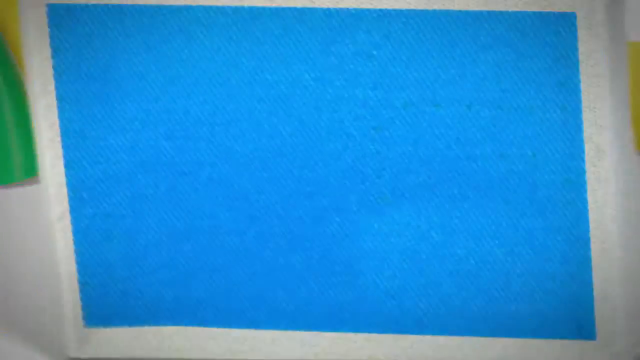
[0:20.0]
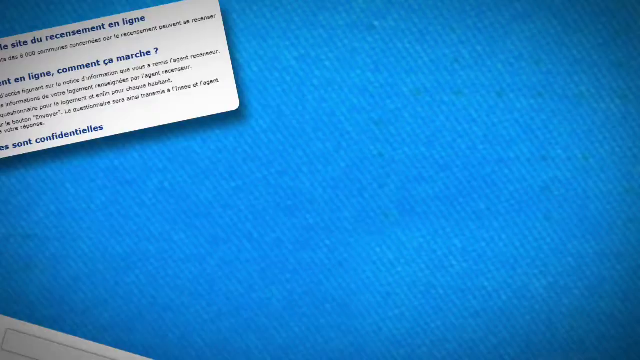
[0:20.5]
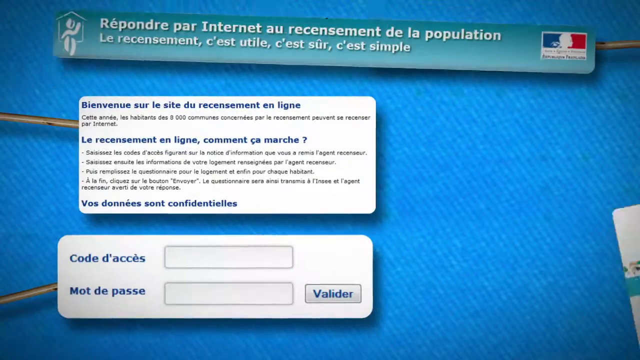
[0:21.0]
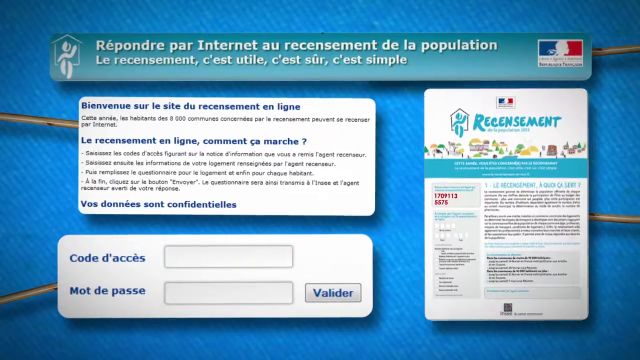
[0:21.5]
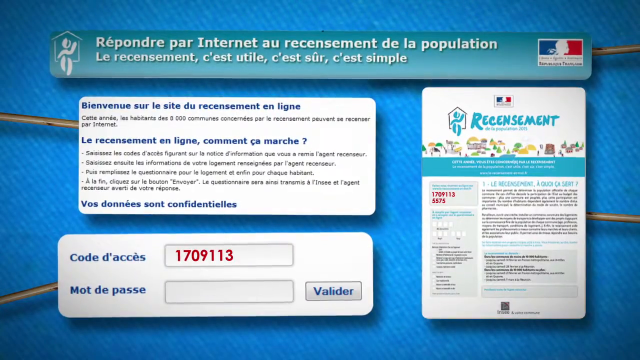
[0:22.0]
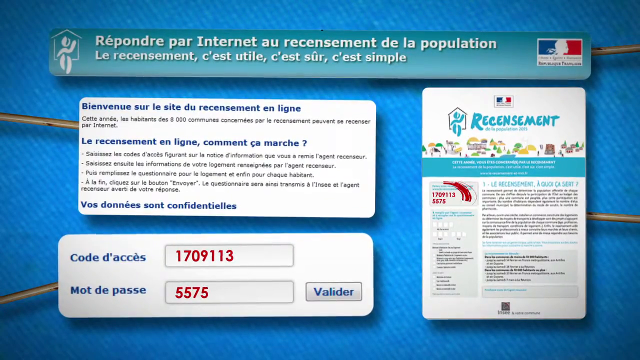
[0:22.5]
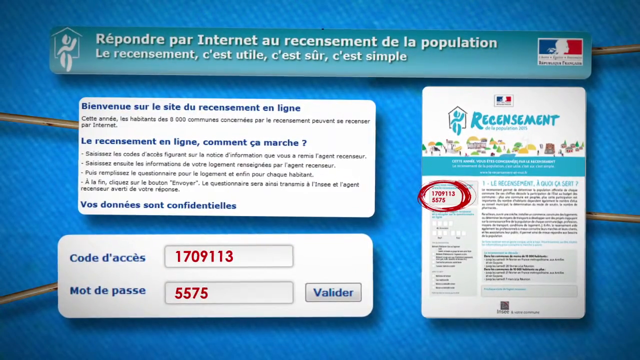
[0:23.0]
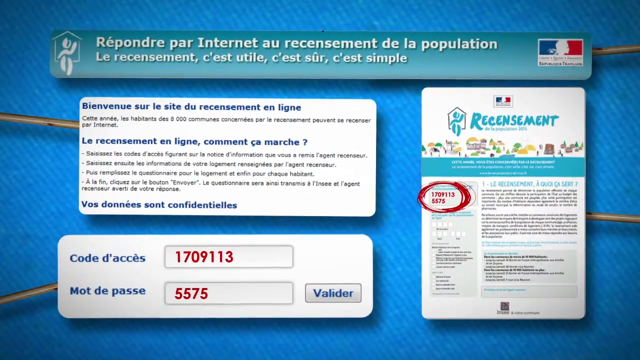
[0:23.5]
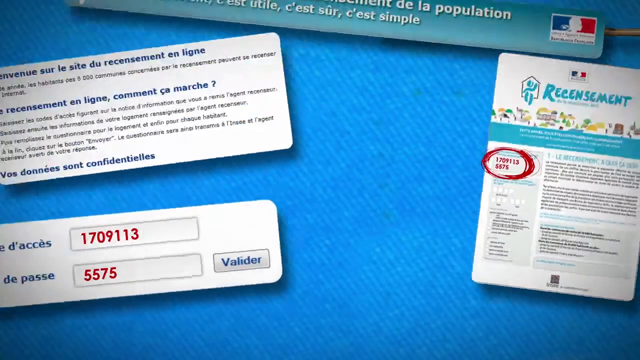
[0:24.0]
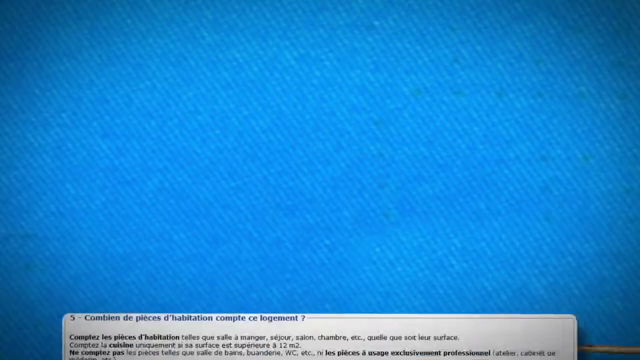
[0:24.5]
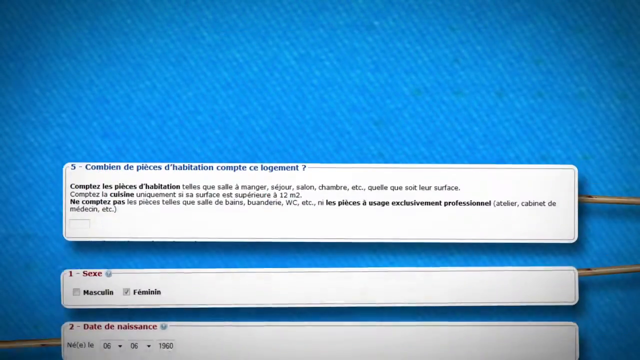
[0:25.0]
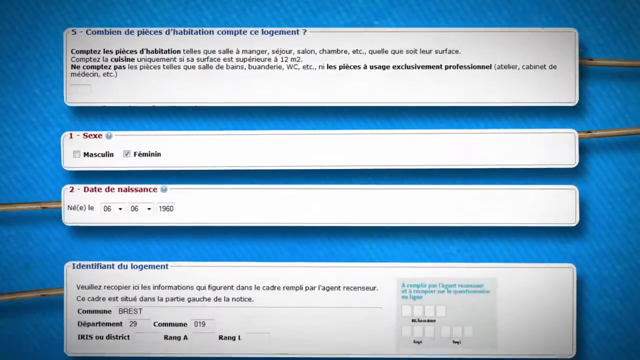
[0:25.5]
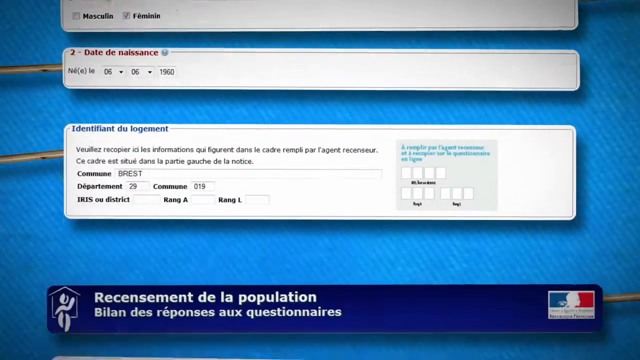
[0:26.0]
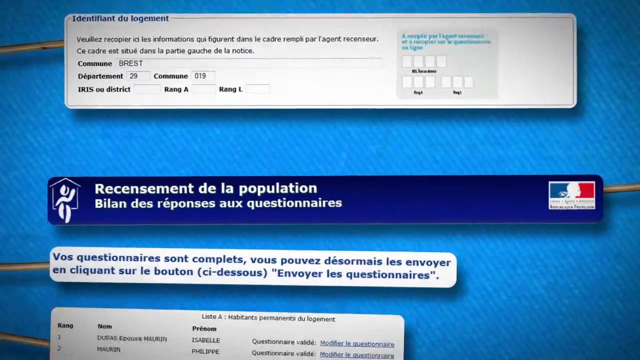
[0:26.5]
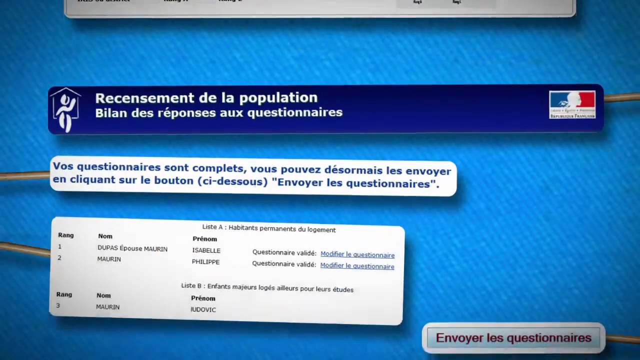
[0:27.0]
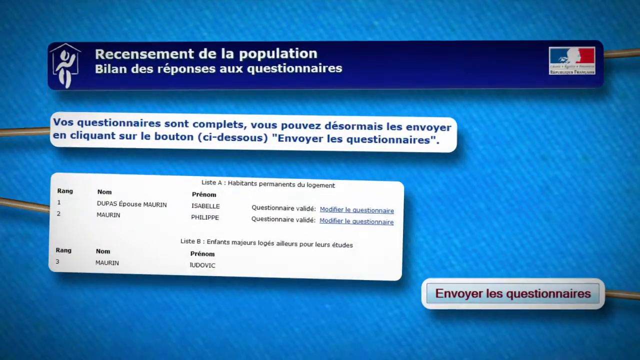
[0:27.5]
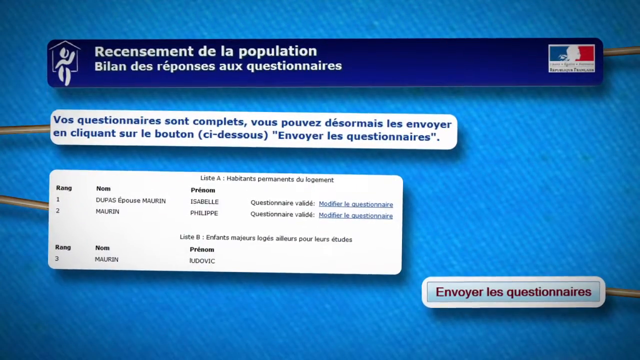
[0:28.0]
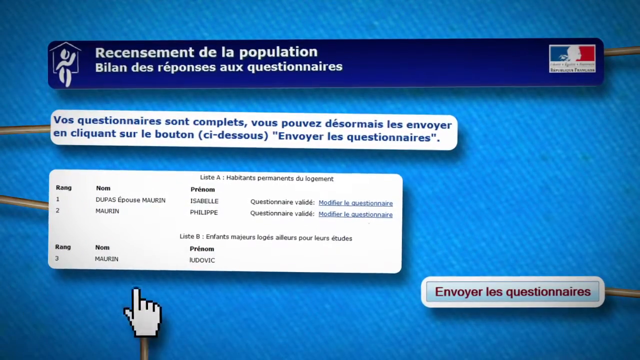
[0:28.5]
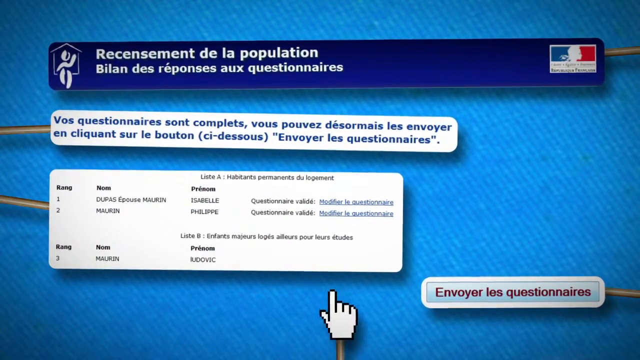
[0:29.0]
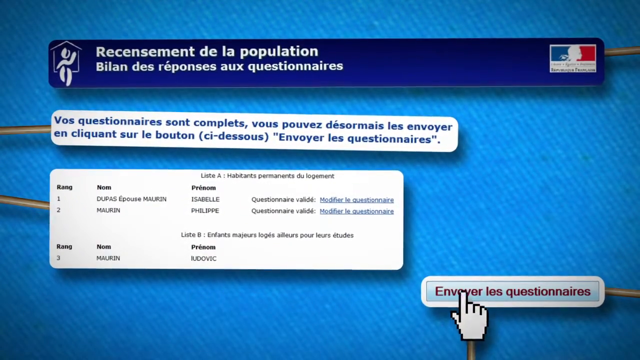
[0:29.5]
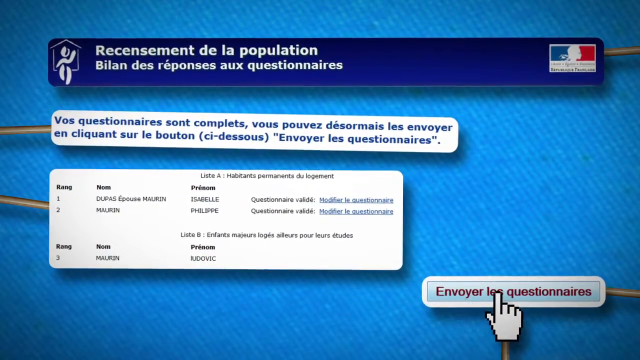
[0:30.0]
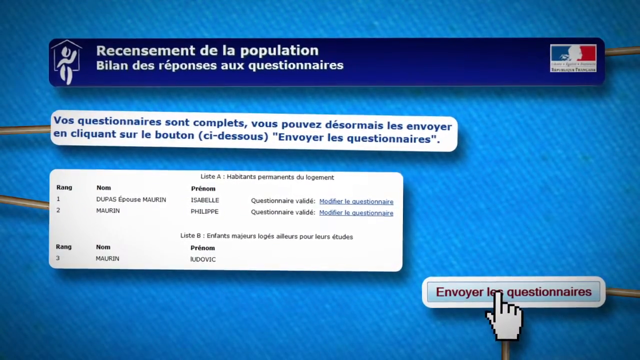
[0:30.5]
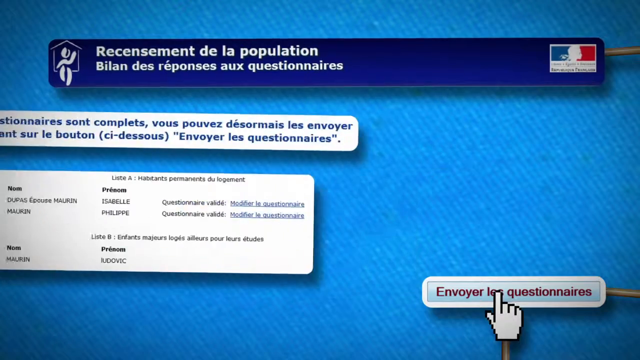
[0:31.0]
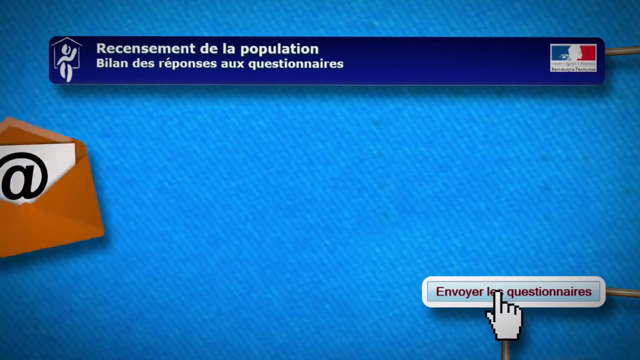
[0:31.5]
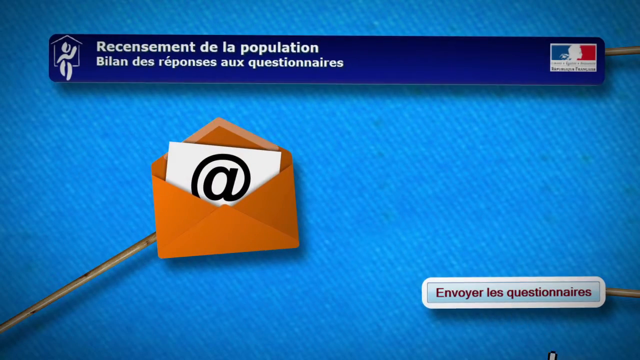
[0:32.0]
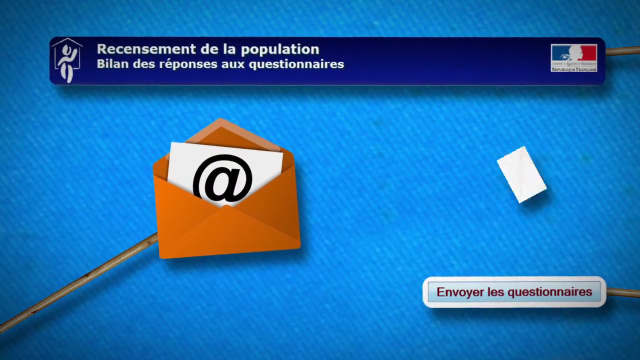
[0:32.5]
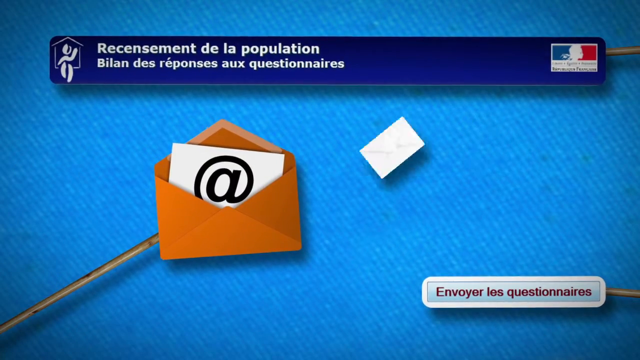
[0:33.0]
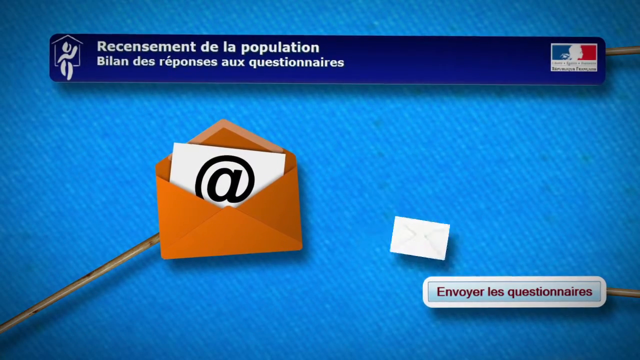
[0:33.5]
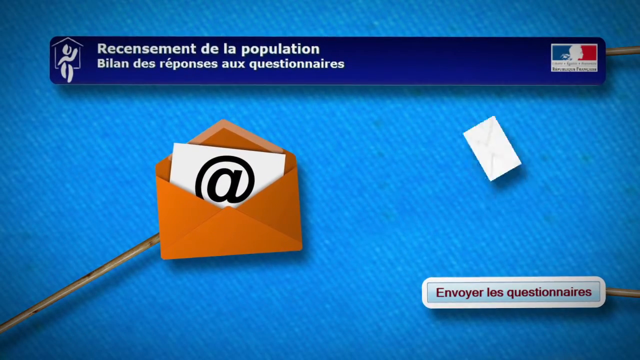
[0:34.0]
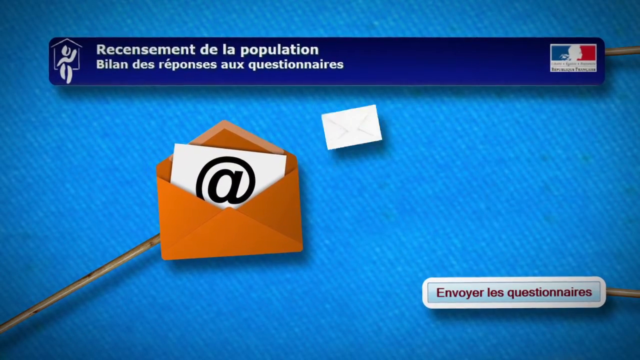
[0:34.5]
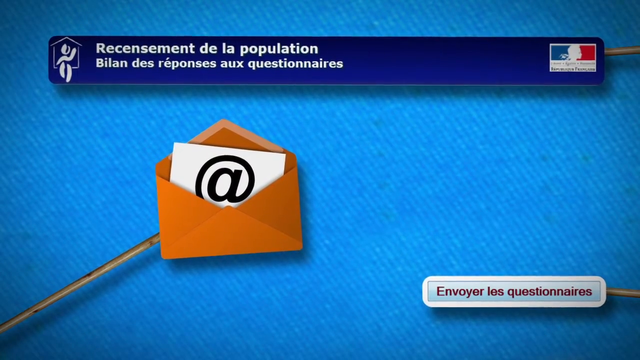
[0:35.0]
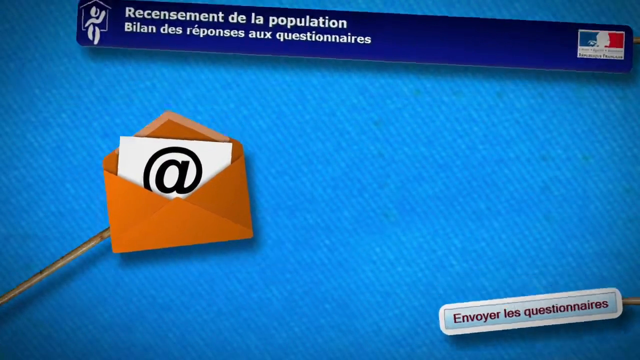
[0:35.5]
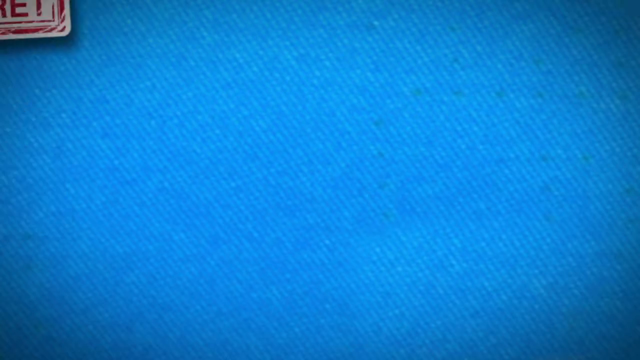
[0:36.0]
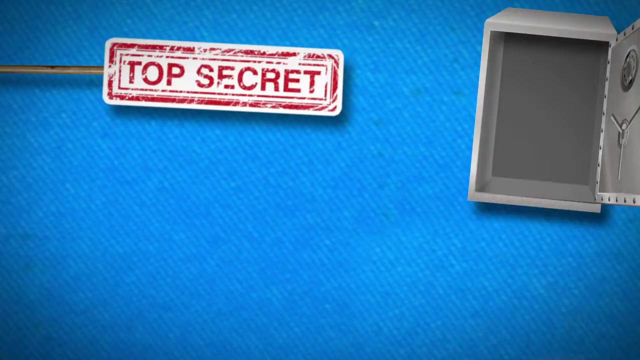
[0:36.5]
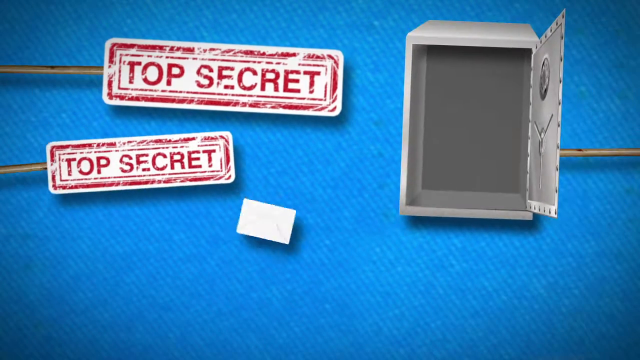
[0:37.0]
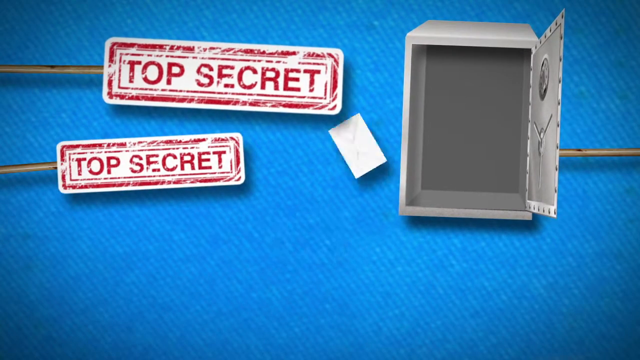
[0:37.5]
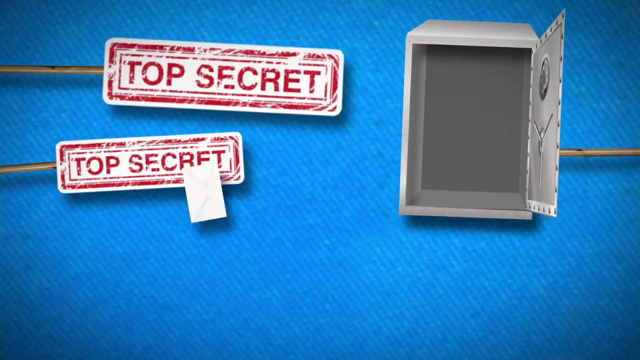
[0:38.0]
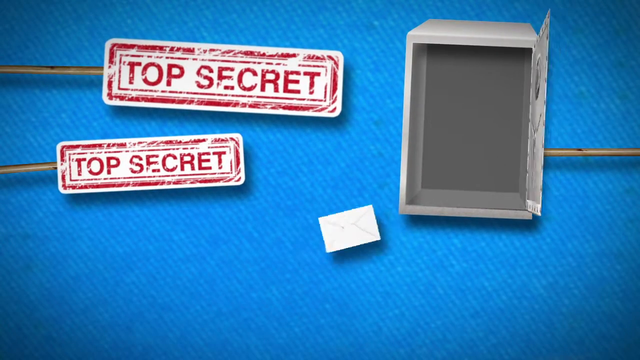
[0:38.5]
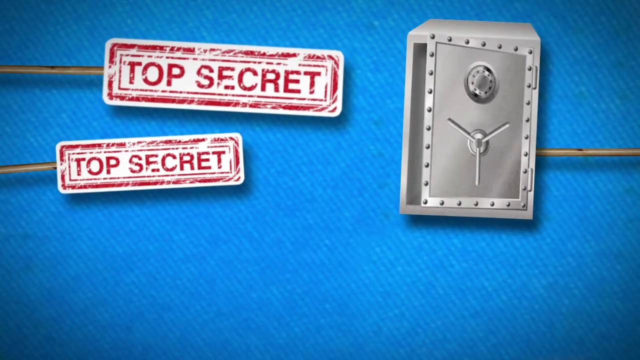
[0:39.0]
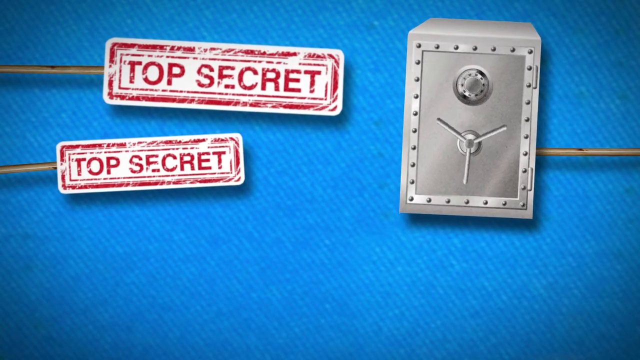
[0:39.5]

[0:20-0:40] Against a blue background, elements of the information source's website appear. Its logo resembles the colors of the French flag, blue, white and red, with the white being a silhouette of a person's profile. Text at the top begins "Repondre par Internet" and includes "c'est utile, c'est sûr, c'est simple." The sequence appears to show how simple it is to access and use the website to obtain a service. Different portions of a questionnaire are shown: number one asks for gender, male or female, and number two asks for date of birth; these are auto-filled with female selected and 6-6-1960 as the date of birth. The next section asks for information on an address or residential area. The view scrolls on to the next page, showing a few more questions, here listing people, presumably household members, and then a section to submit the questionnaire.